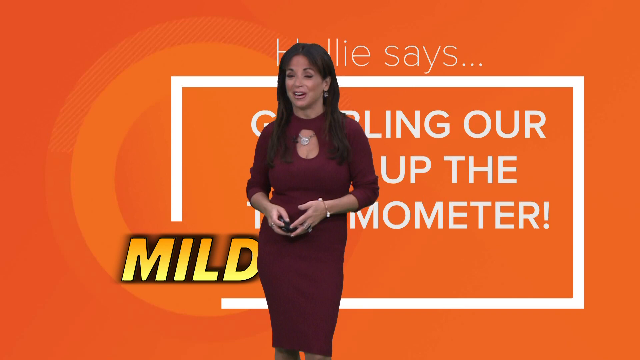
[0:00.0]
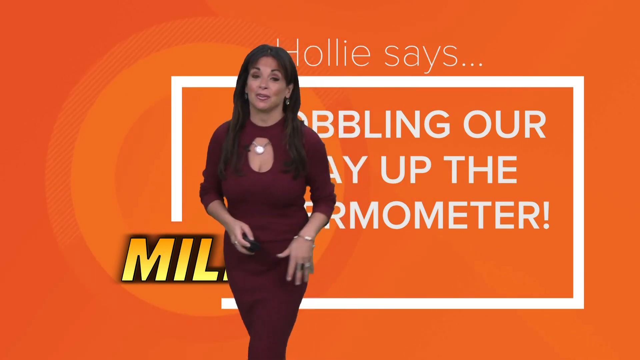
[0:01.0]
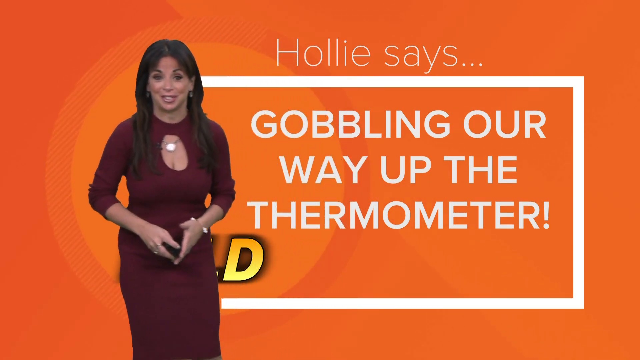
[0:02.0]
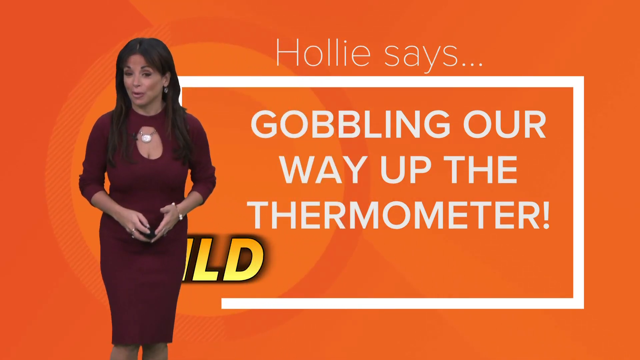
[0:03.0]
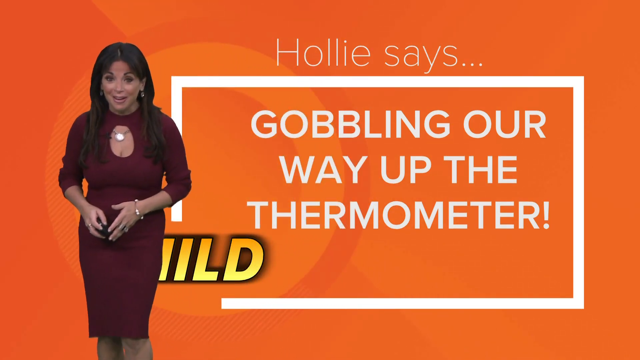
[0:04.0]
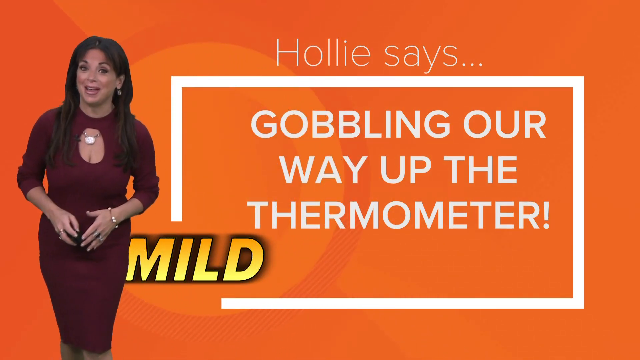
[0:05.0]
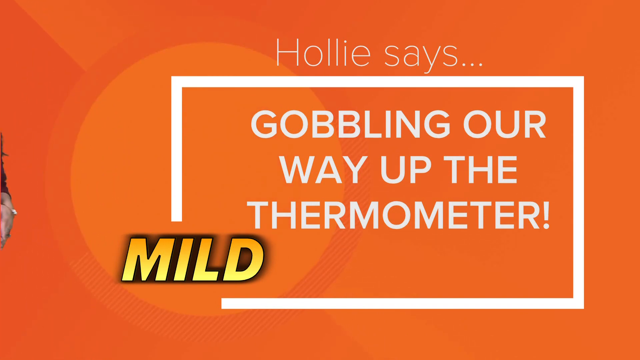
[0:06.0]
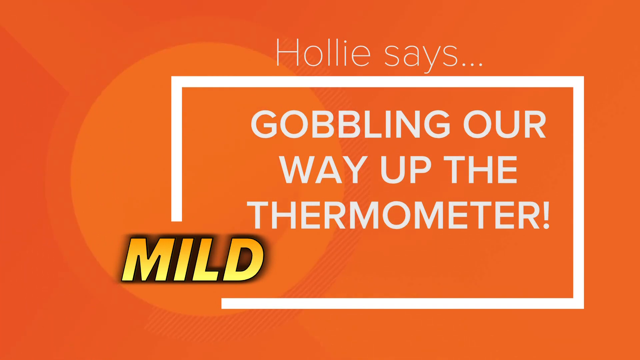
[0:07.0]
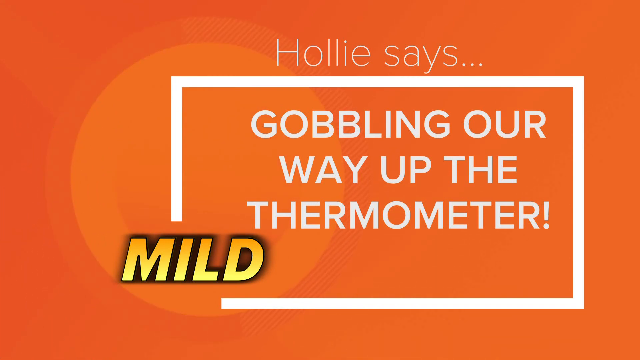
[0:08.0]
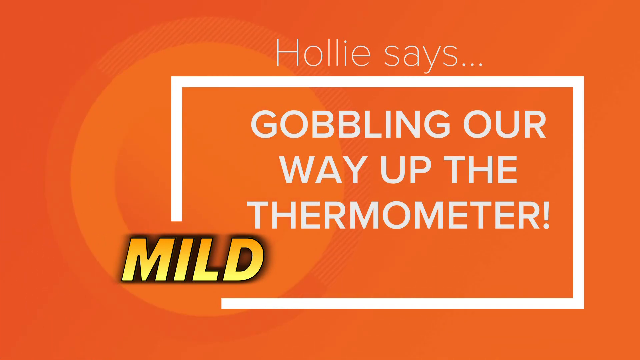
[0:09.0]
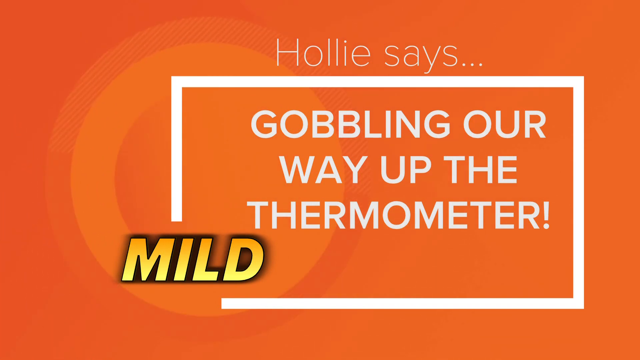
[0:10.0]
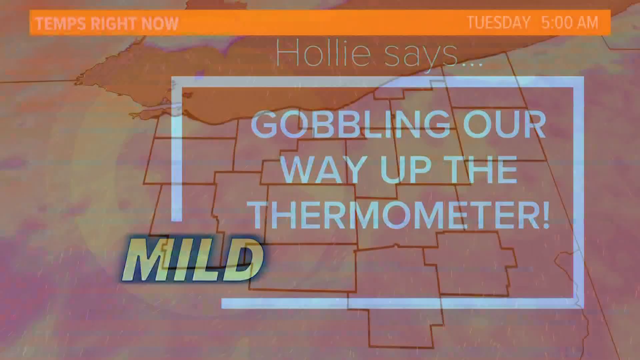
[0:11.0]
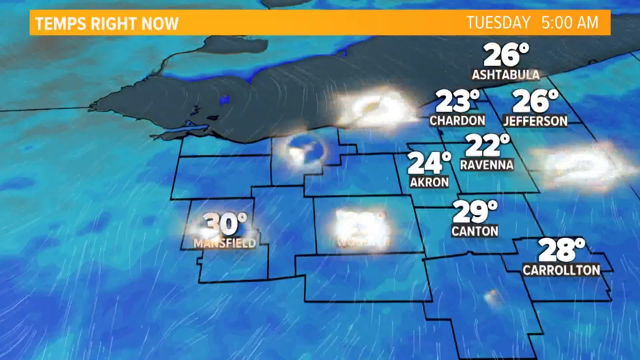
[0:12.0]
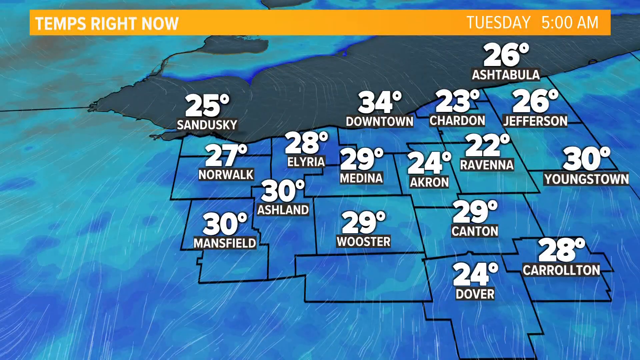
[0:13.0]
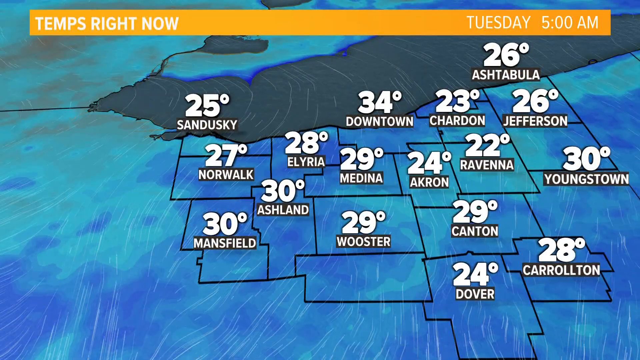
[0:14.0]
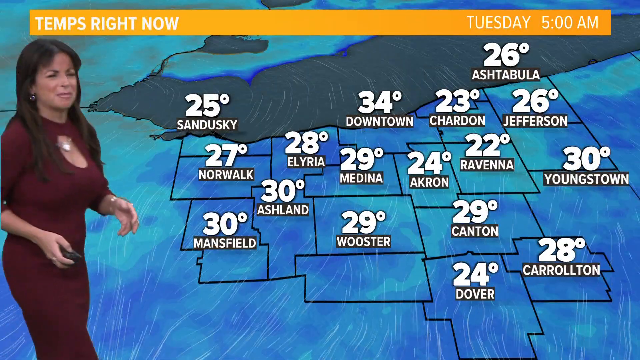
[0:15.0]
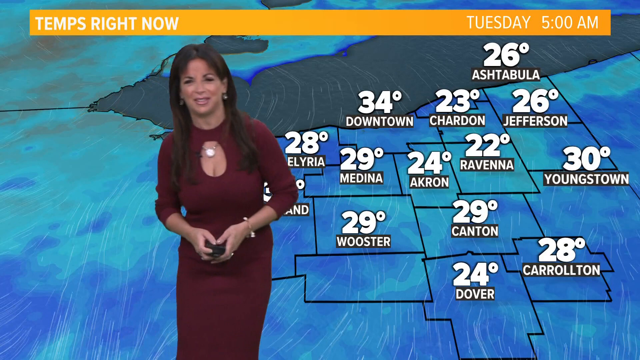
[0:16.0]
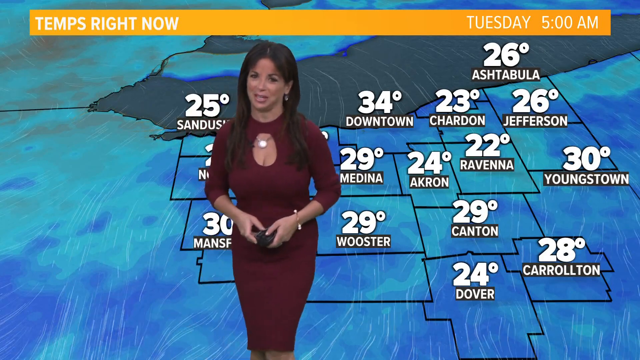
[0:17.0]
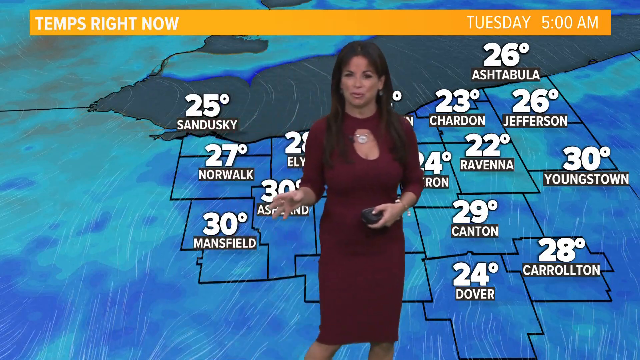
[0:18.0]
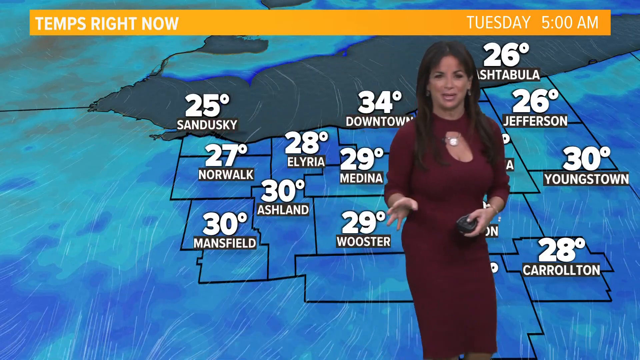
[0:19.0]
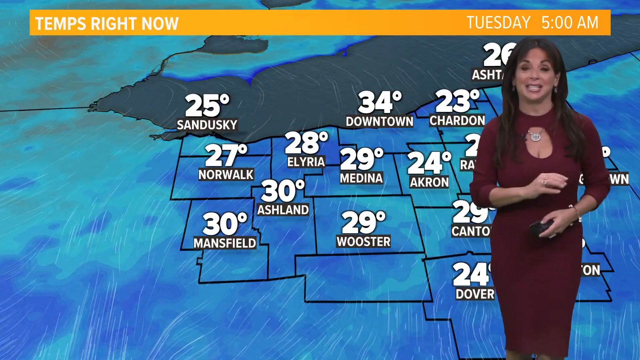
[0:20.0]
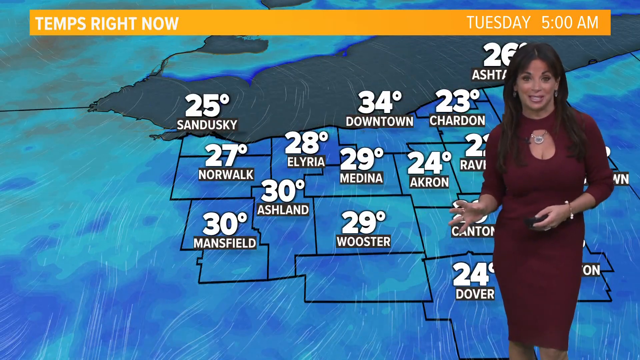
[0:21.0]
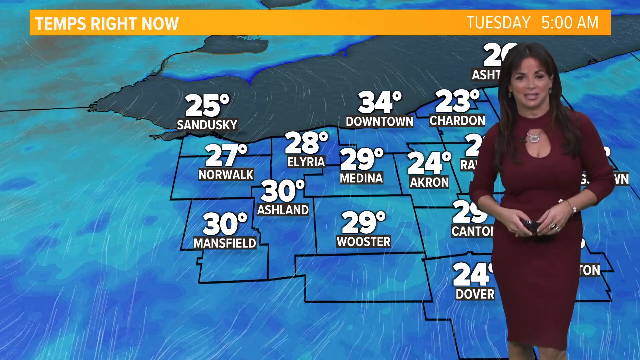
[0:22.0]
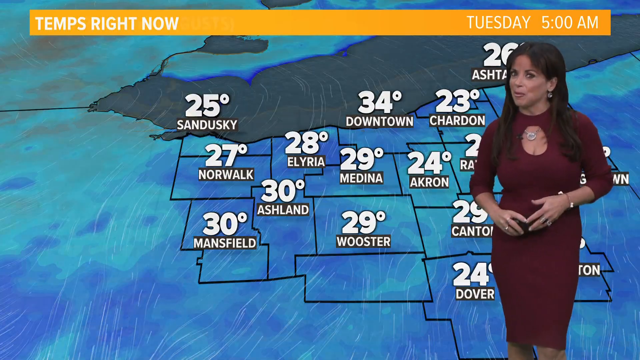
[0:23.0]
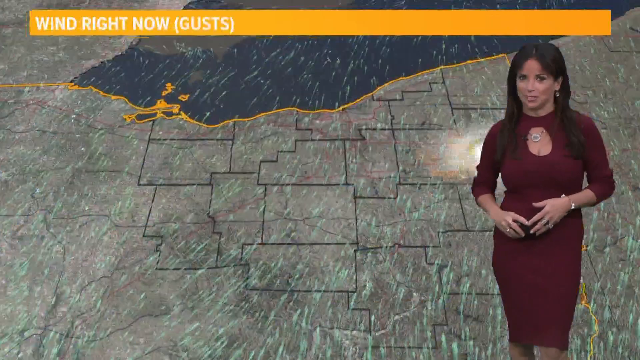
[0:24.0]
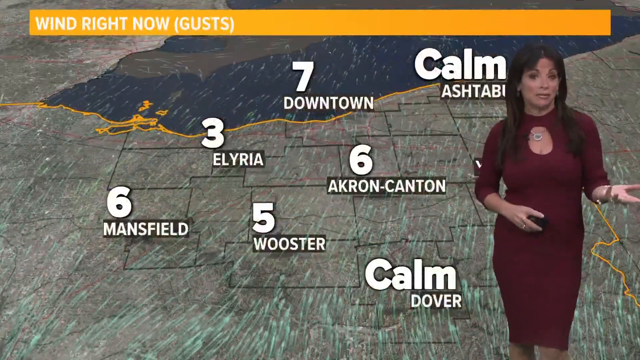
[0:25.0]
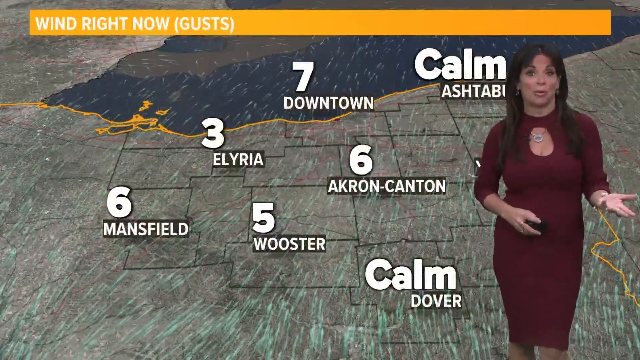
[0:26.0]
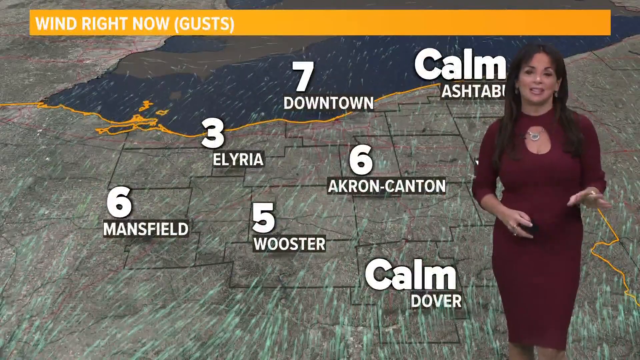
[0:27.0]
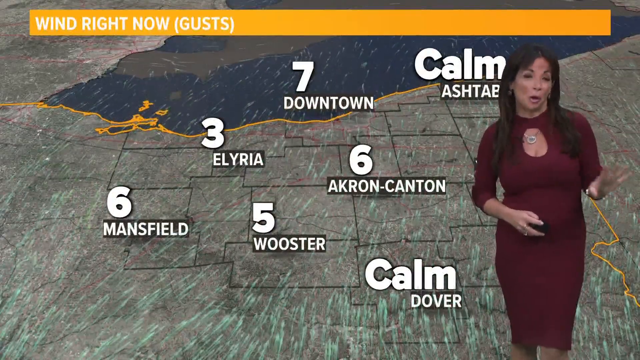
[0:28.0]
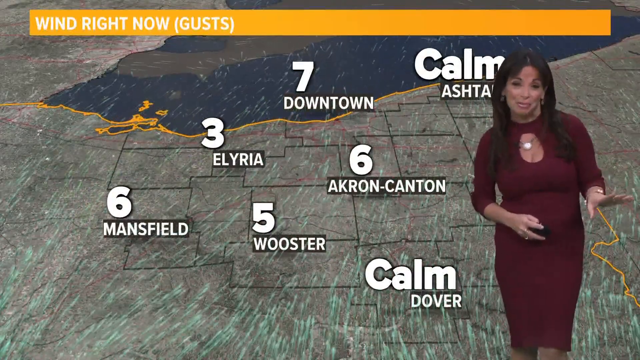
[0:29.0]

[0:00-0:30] A woman wears a burgundy dress that is fairly long, reaching past her knees, with an open area around the chest that reveals a necklace. She has long brown hair and wears jewelry; she appears to have several rings and a bracelet on her left wrist. The background behind her is orange with white text, and on the lower left-hand side the word "MILD" is visible in large yellow letters. She steps to the left of the screen and the text becomes fully visible, reading "Holly says, gobbling our way up the thermometer." She moves further to the left until she disappears off-screen entirely. The screen then transitions to a map showing various cities with temperatures posted; the temperatures are fairly cold, ranging from as low as 22 degrees to as high as 34 degrees. The woman walks back into the front of the screen and begins to gesture. She holds a clicking device or some kind of control for the display in her left hand.